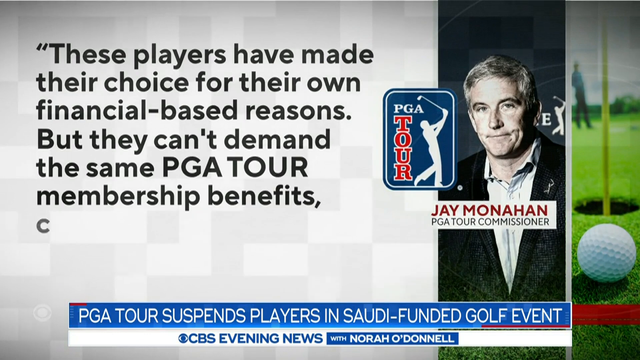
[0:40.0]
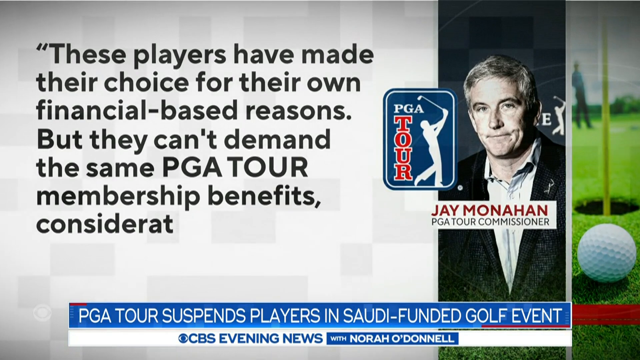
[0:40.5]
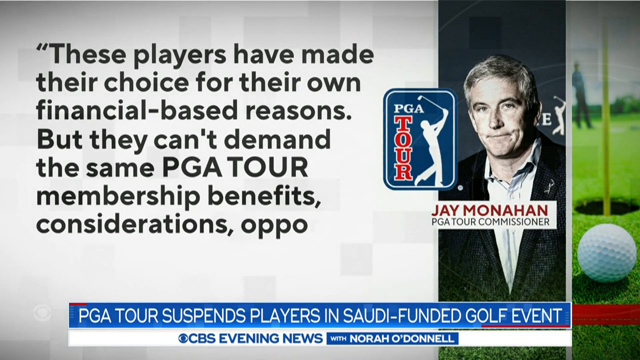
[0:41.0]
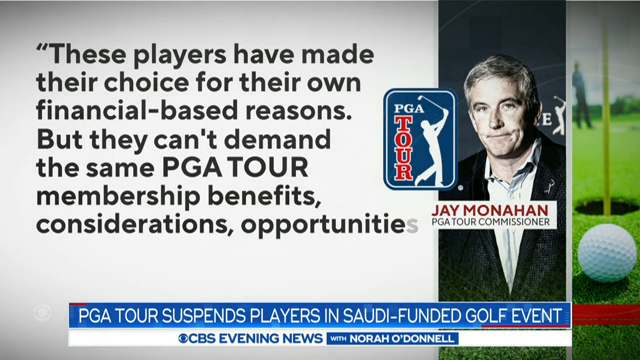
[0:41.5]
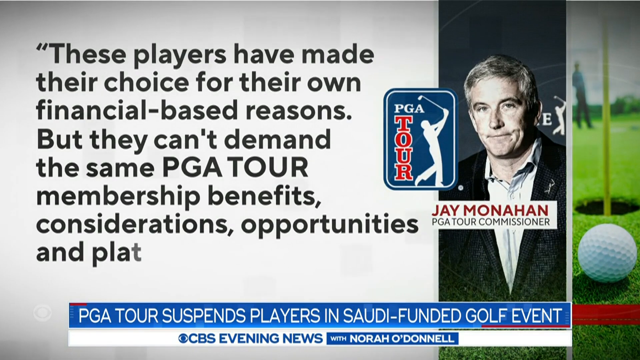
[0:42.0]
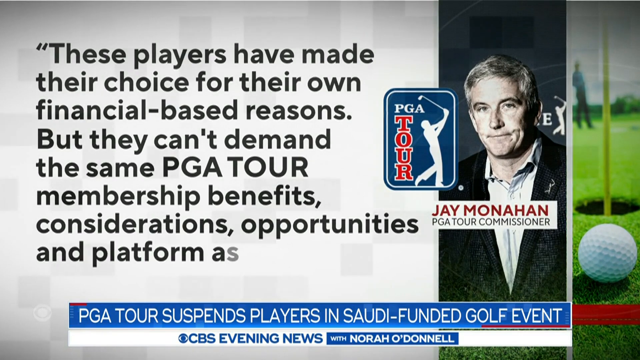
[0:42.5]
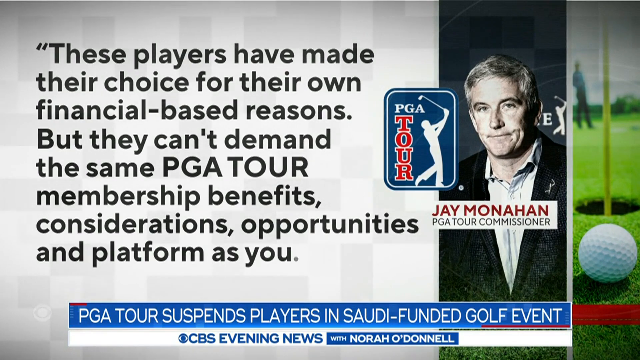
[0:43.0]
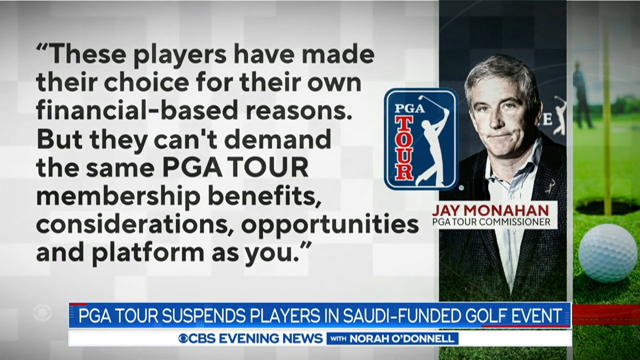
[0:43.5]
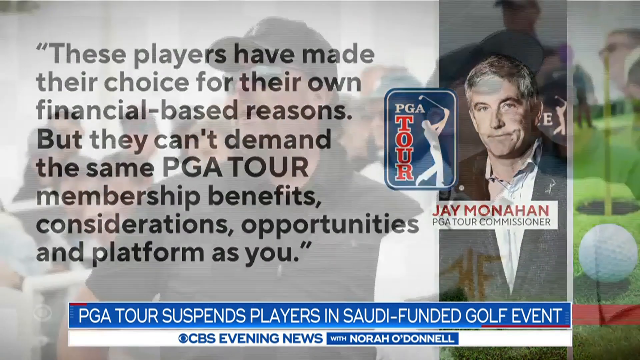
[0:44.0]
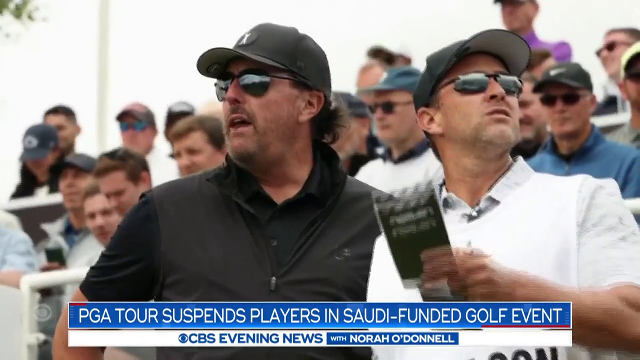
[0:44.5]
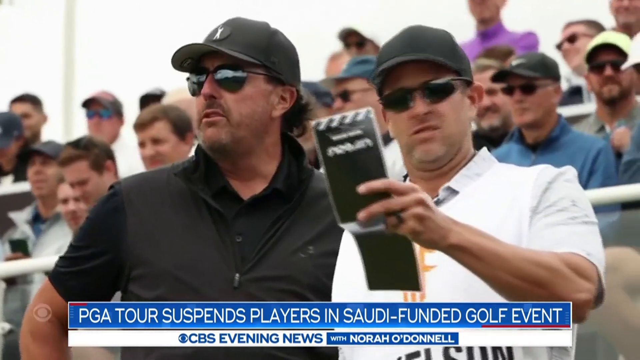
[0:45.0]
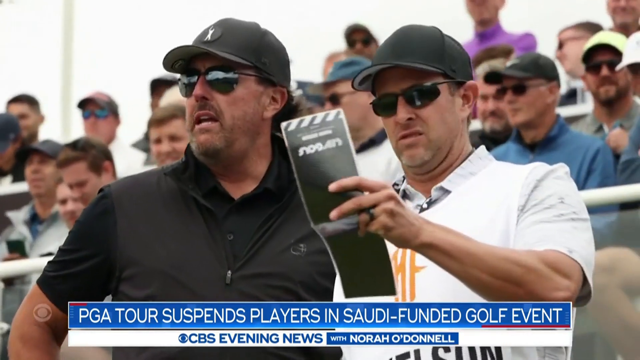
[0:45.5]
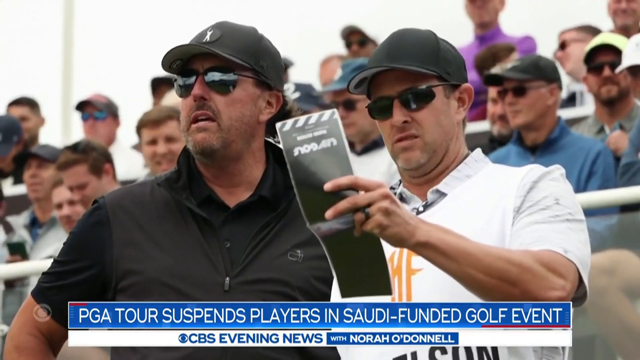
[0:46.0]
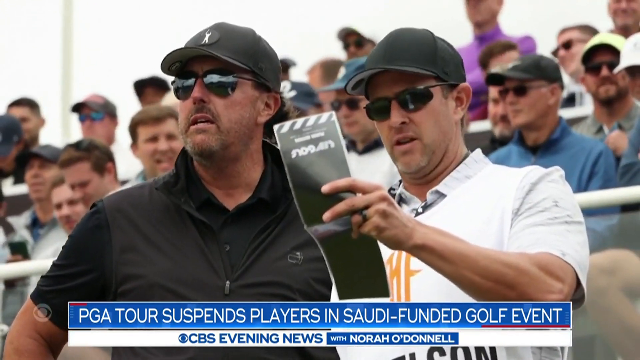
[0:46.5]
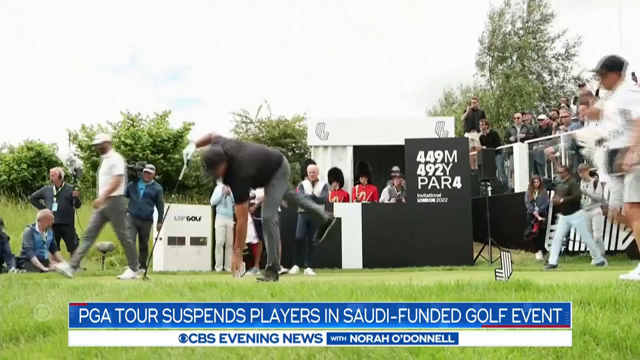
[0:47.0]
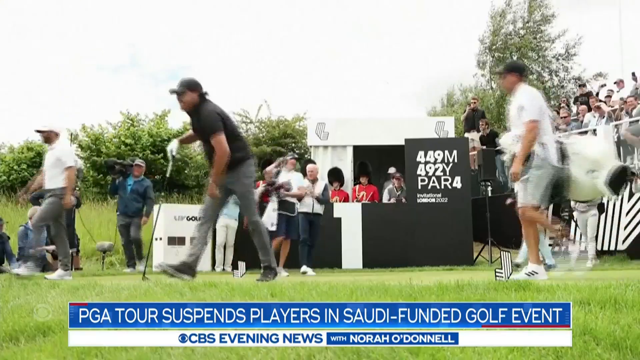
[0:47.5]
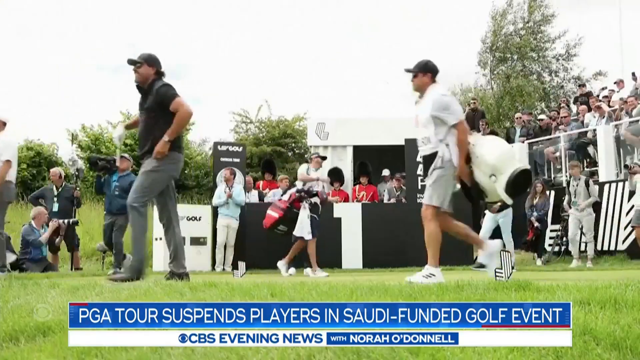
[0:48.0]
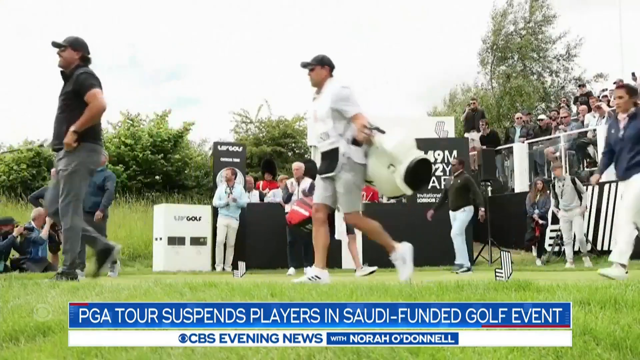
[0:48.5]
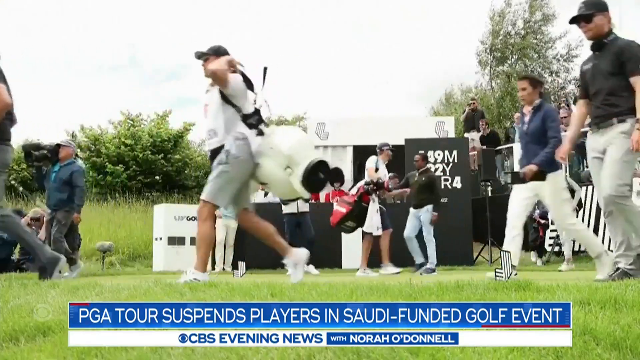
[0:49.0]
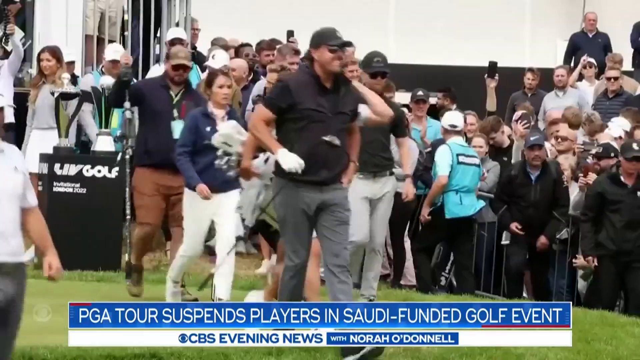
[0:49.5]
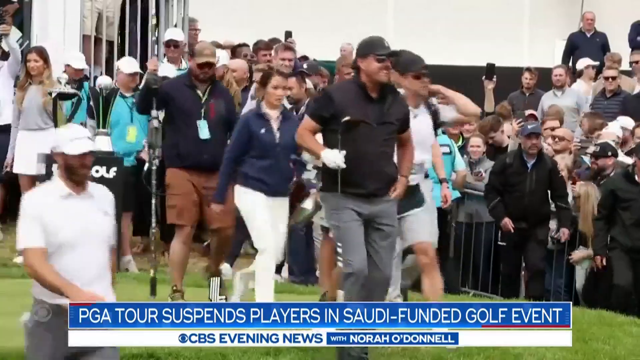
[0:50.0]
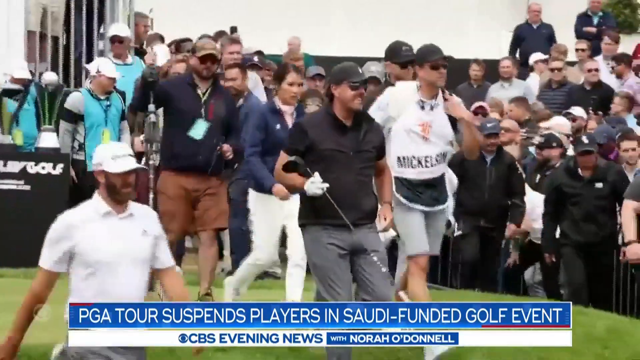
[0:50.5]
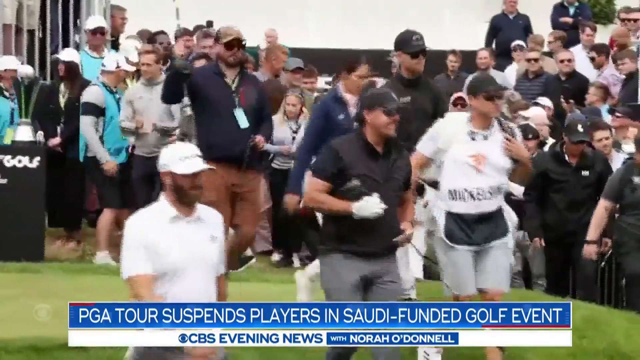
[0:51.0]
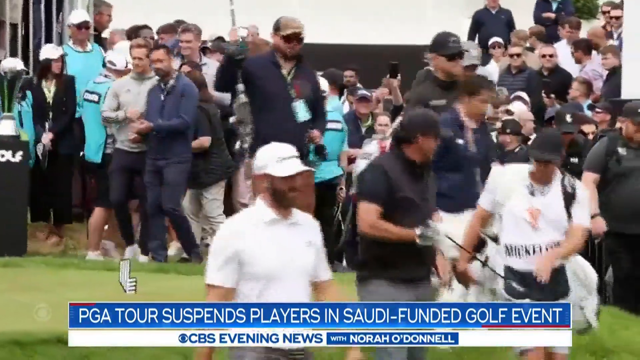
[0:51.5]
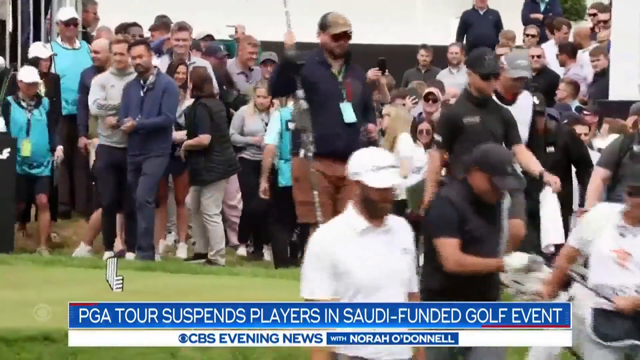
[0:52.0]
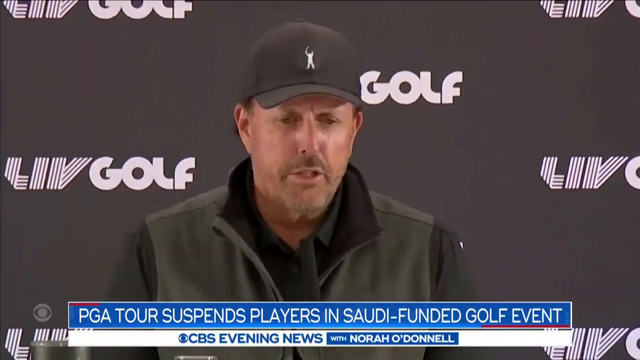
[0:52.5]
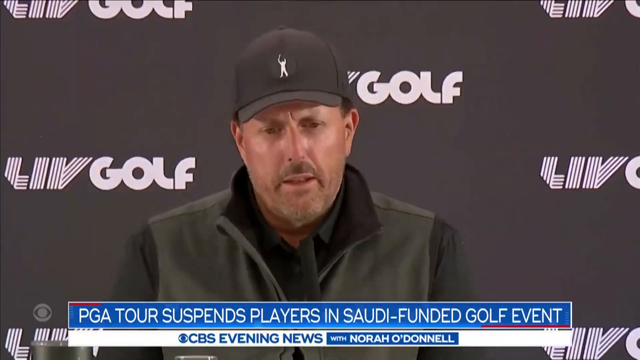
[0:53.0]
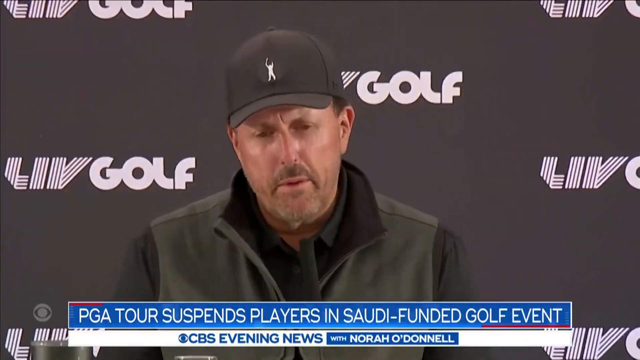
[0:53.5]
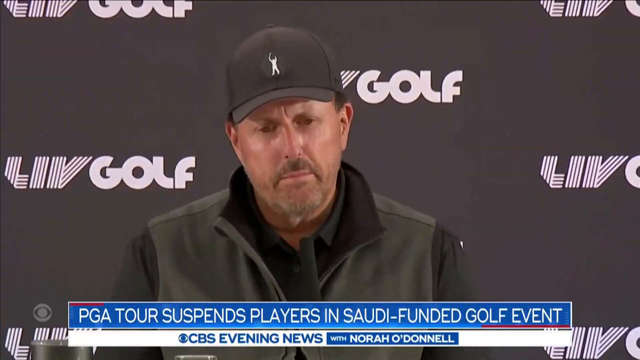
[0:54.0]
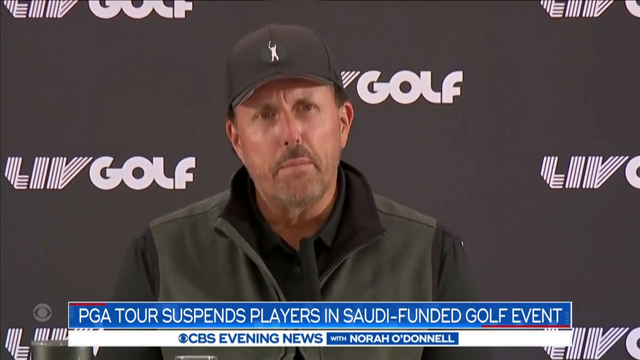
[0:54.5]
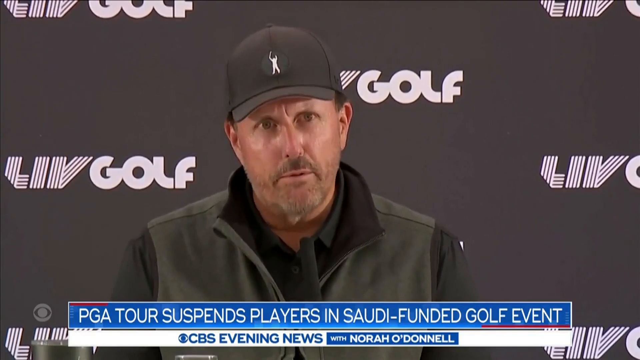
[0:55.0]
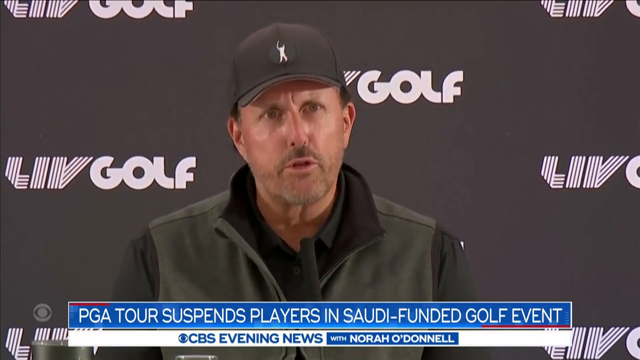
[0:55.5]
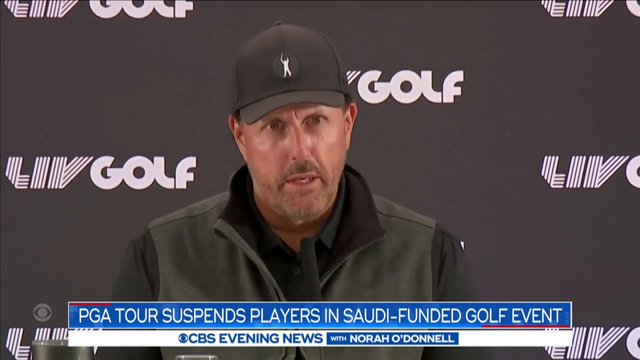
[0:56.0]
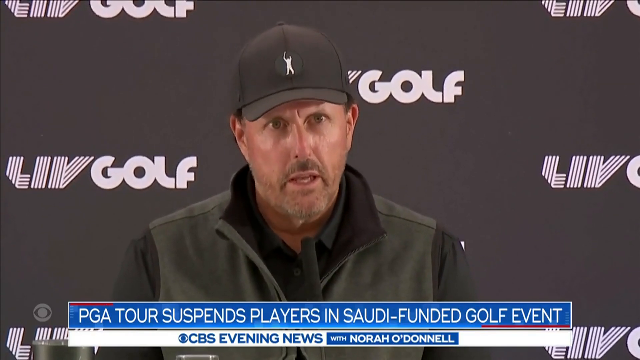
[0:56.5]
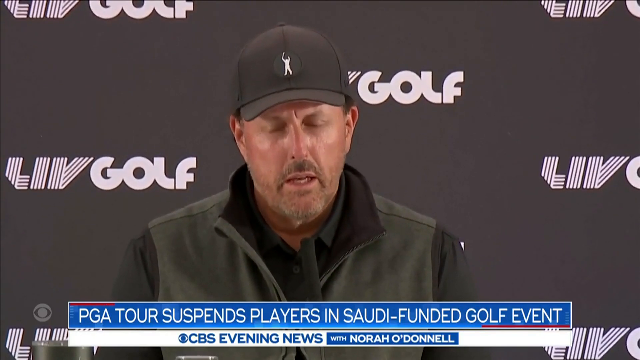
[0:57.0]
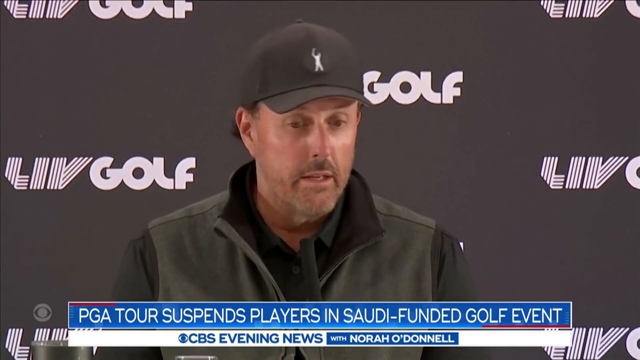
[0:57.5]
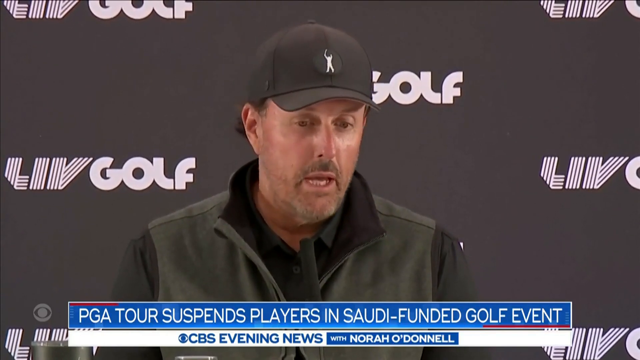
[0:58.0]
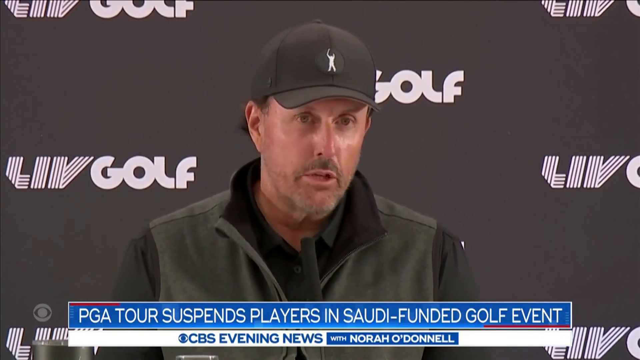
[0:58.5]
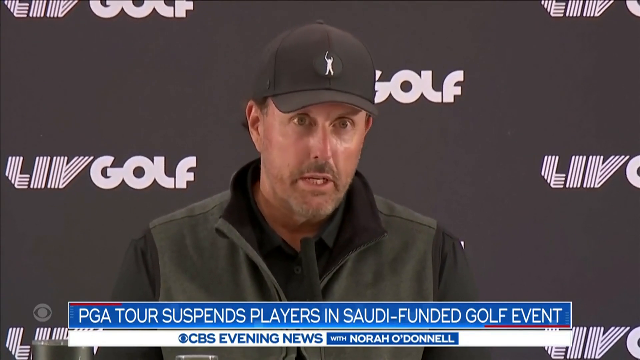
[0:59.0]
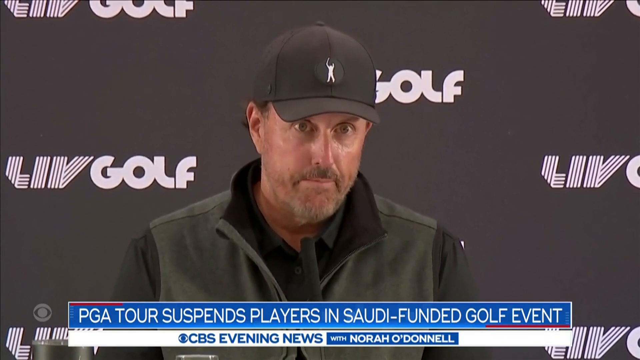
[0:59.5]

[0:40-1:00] The CBS Evening News with Nora O'Donnell story continues with a title bar across the bottom center of the screen. The story title is in white font on a blue background, reading "PGA Tour suspends players in Saudi-funded golf tournament", and underneath it, in blue font on a white background, is the channel name, CBS Evening News. The footage shows an obviously very busy golf tournament, with people walking while holding golf clubs, roped-off stands, and a marching band standing beside the green. A man is shown speaking, addressing the issue, in front of a black screen with "live golf" printed in multiple places. This is followed by the scoreboard of the live golf tournament against beautiful, slightly cloudy skies.